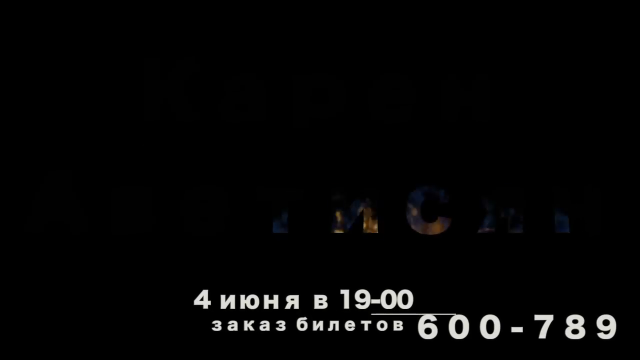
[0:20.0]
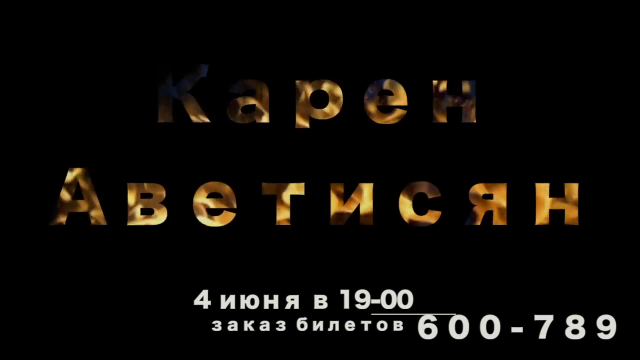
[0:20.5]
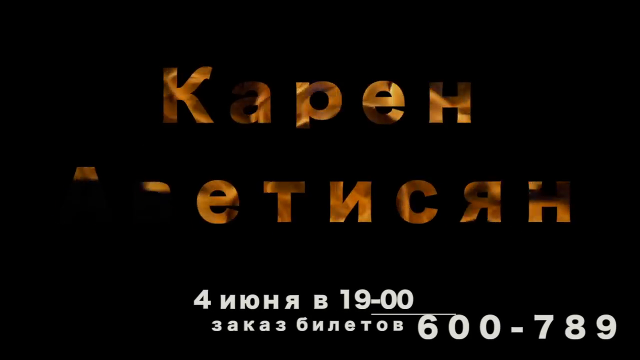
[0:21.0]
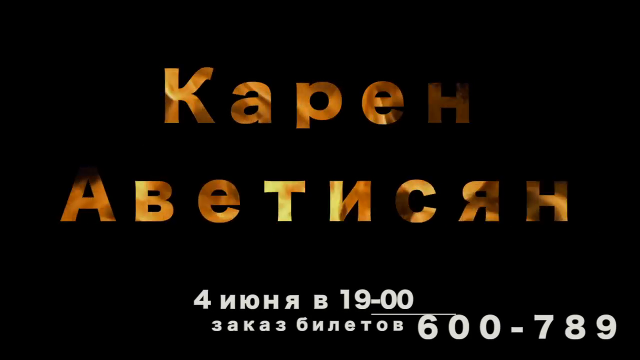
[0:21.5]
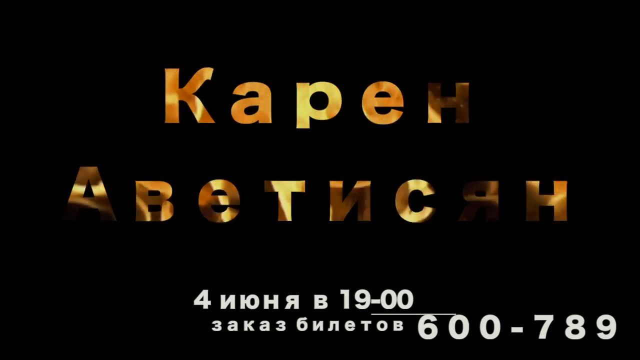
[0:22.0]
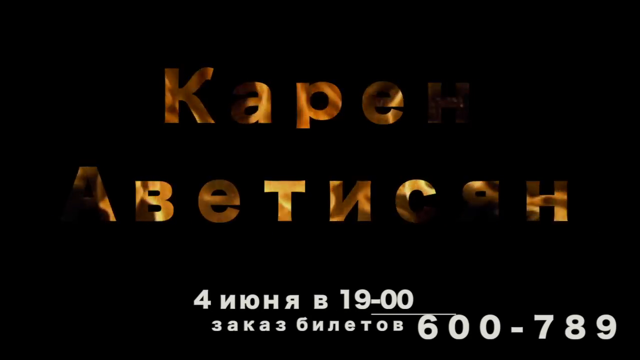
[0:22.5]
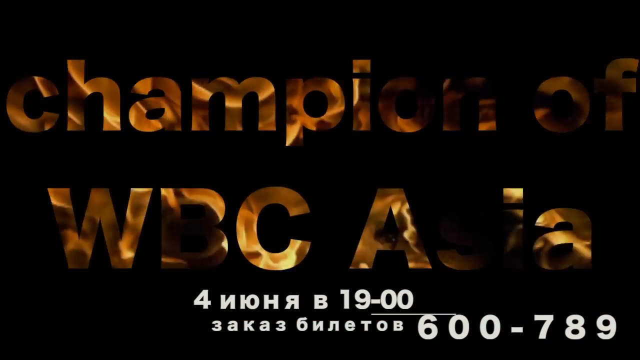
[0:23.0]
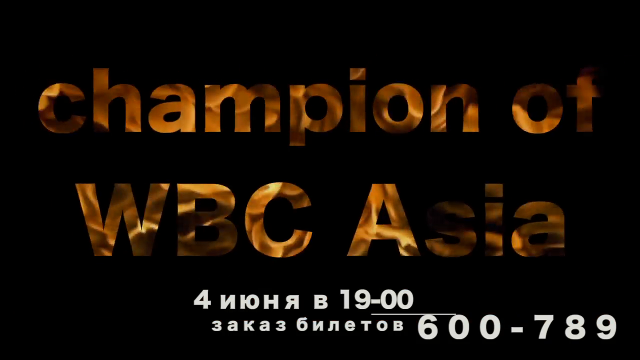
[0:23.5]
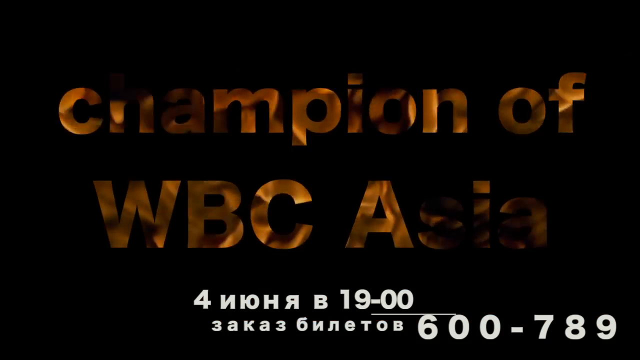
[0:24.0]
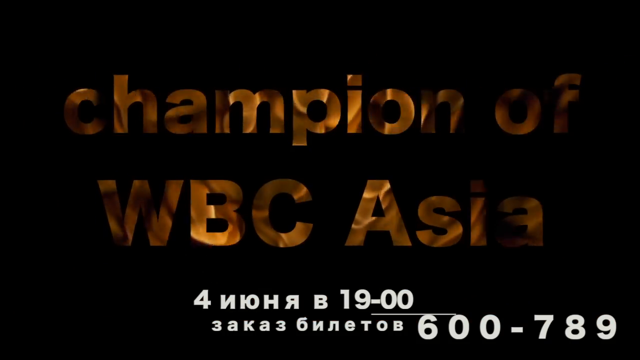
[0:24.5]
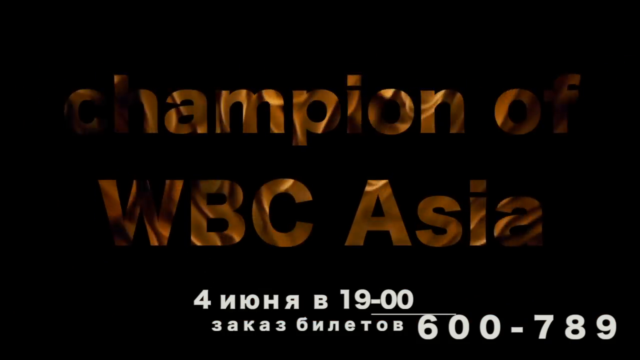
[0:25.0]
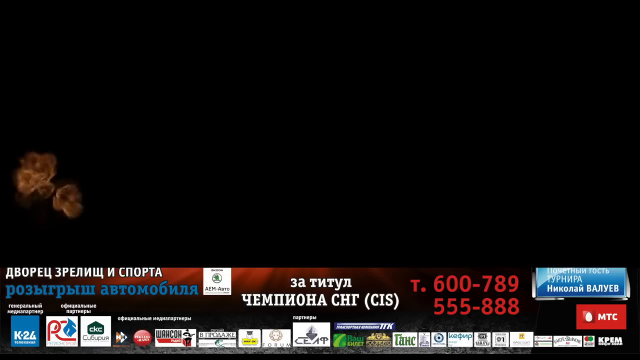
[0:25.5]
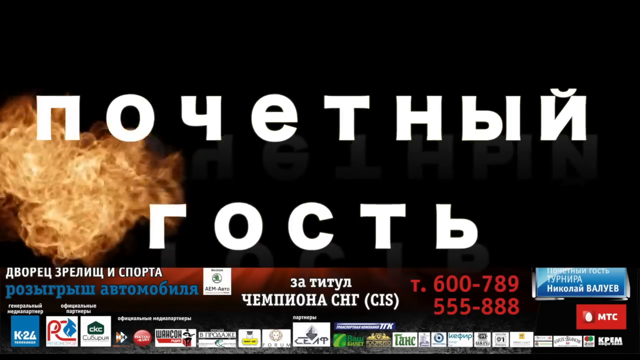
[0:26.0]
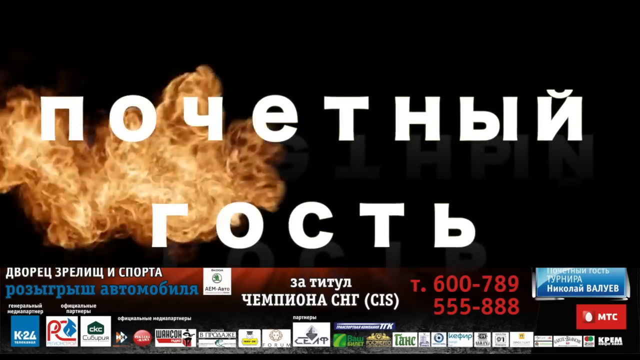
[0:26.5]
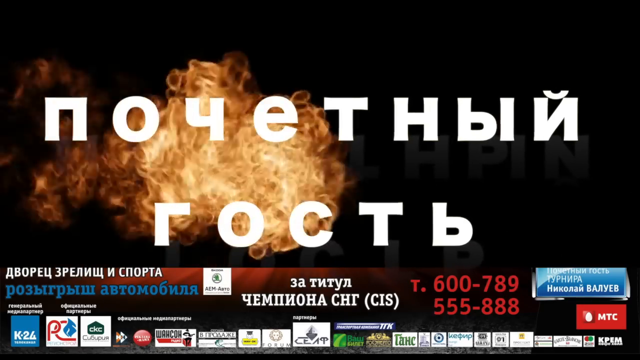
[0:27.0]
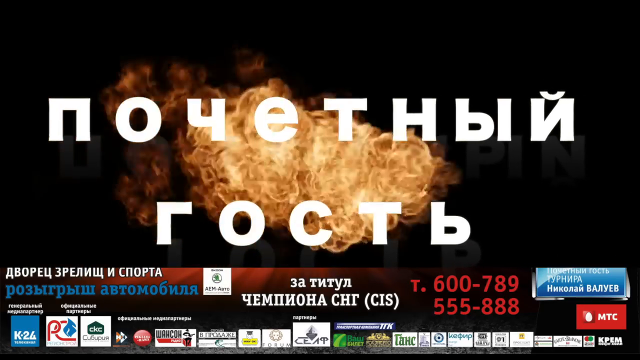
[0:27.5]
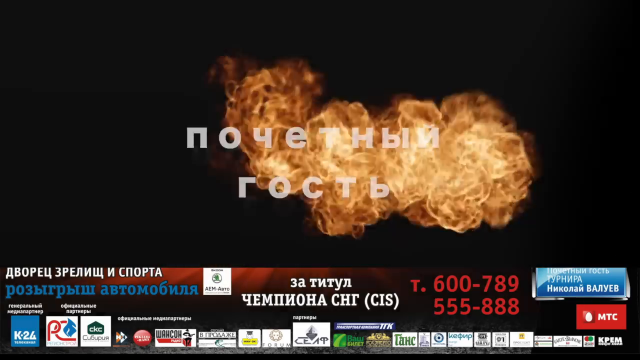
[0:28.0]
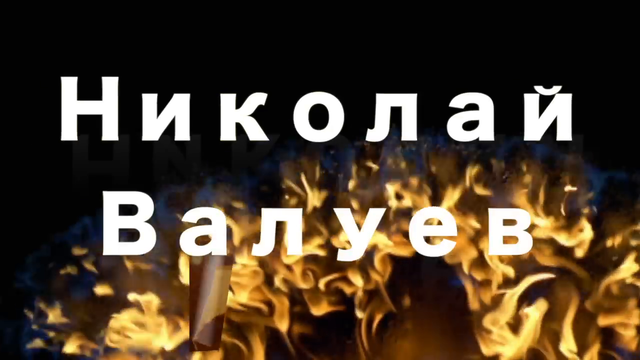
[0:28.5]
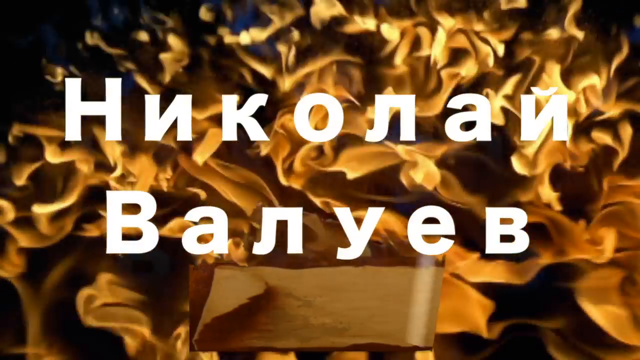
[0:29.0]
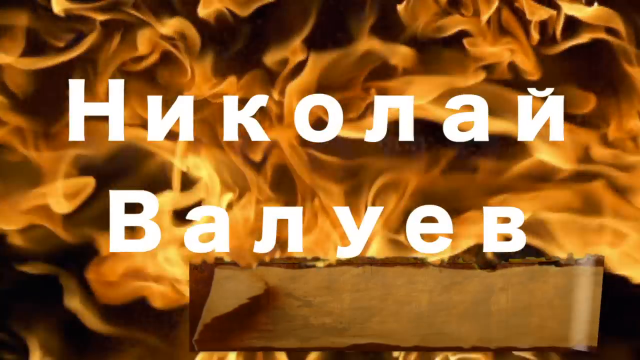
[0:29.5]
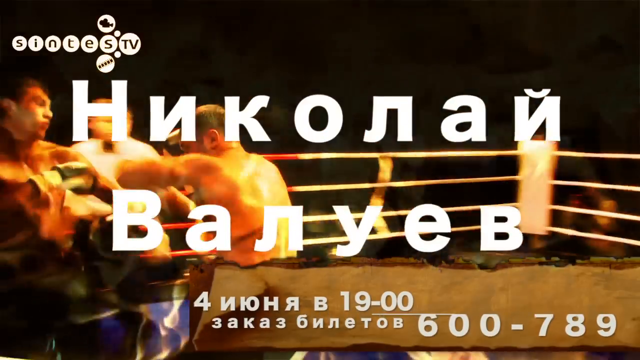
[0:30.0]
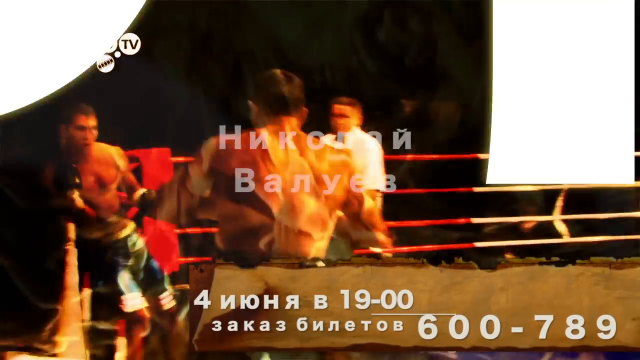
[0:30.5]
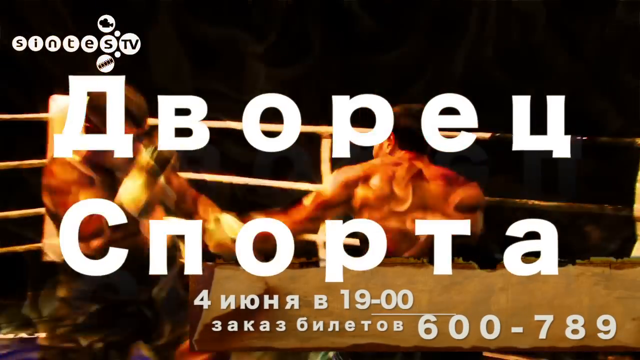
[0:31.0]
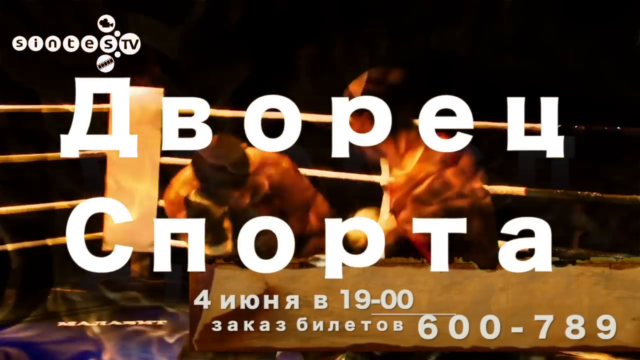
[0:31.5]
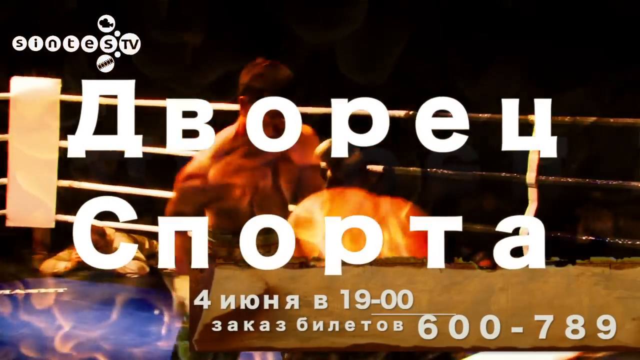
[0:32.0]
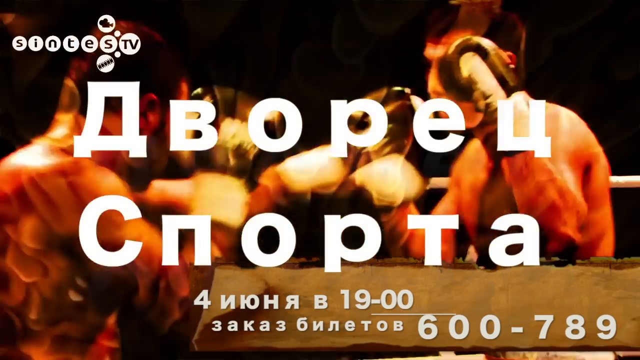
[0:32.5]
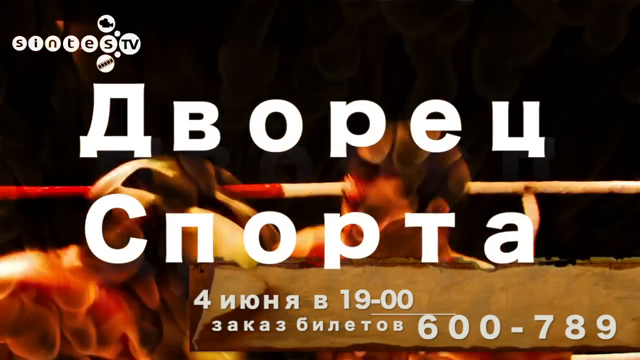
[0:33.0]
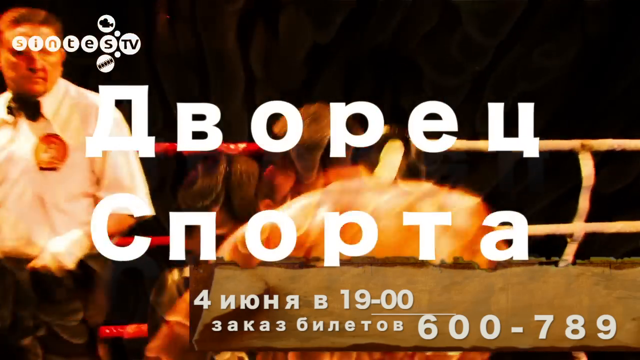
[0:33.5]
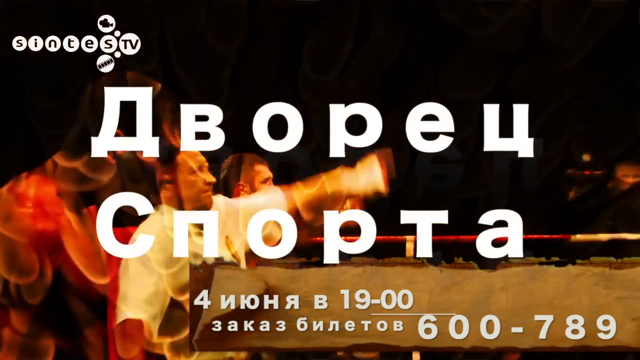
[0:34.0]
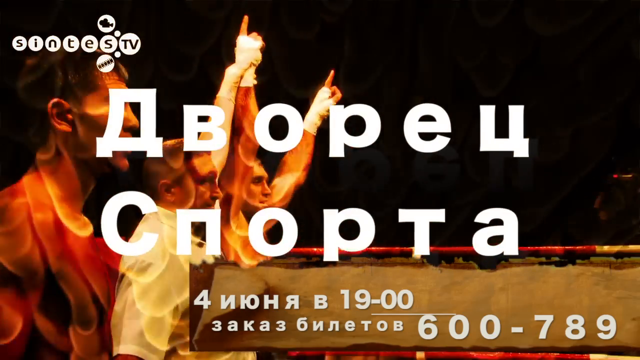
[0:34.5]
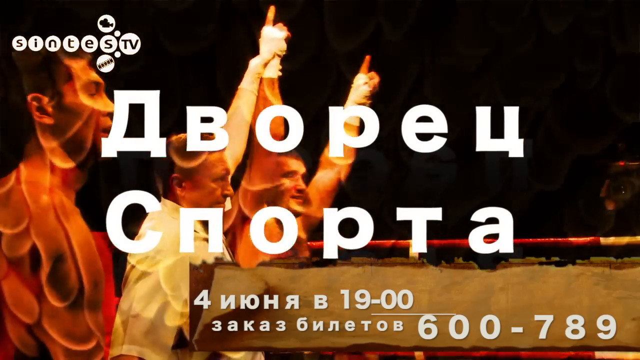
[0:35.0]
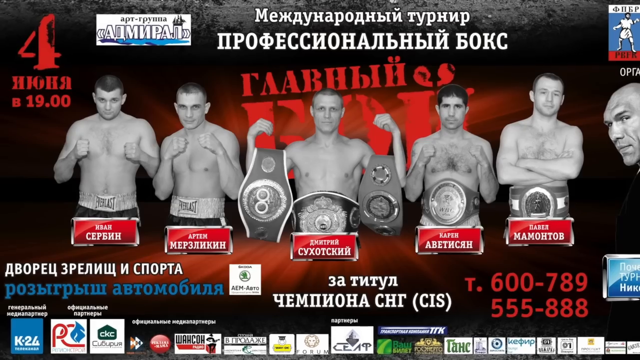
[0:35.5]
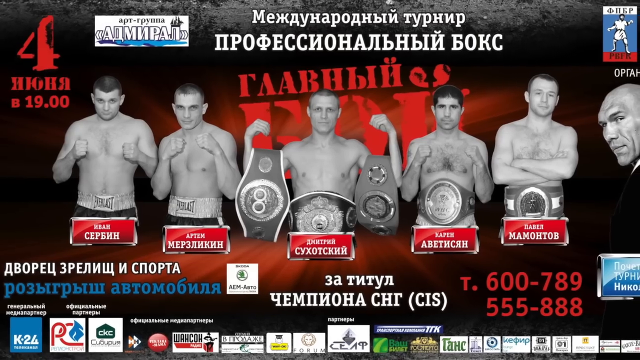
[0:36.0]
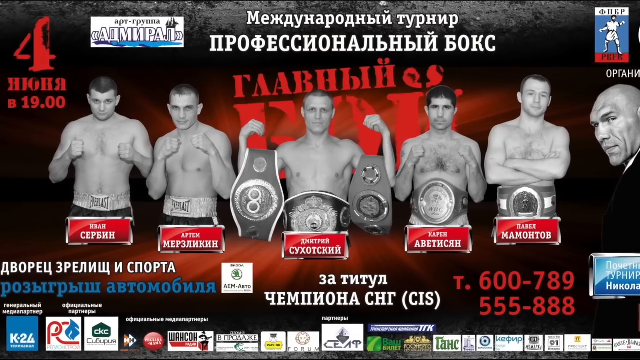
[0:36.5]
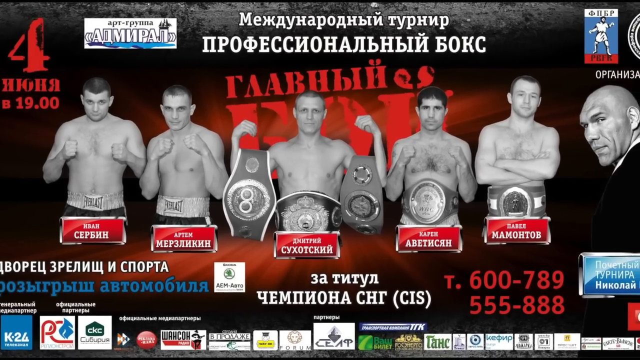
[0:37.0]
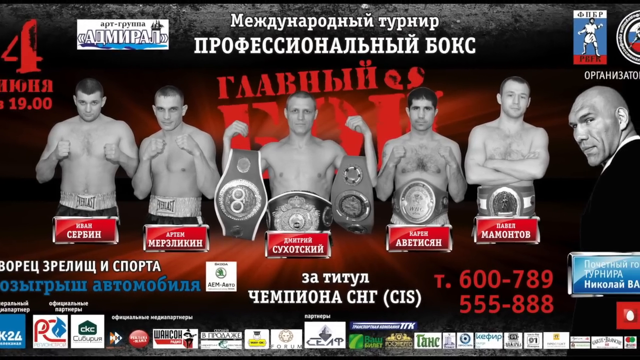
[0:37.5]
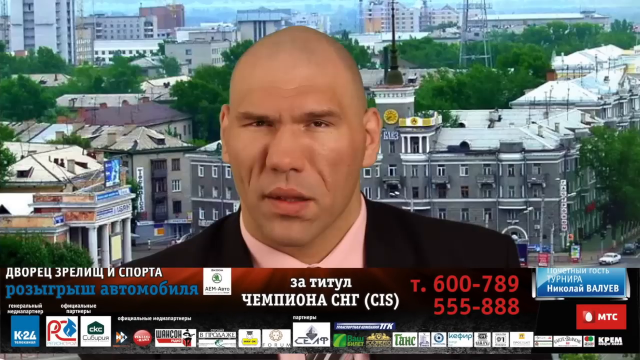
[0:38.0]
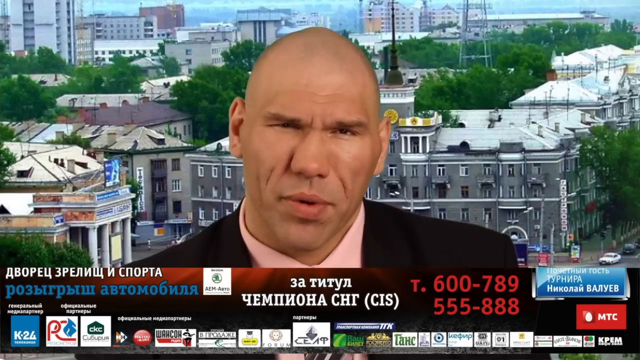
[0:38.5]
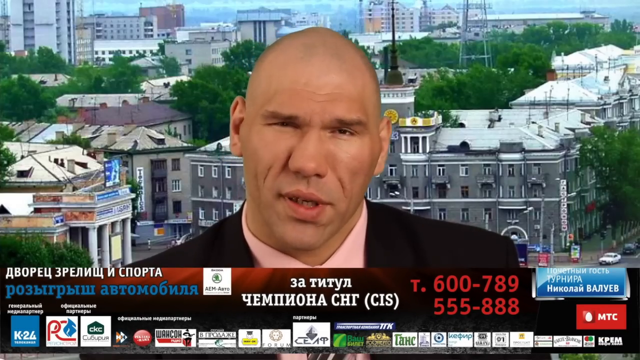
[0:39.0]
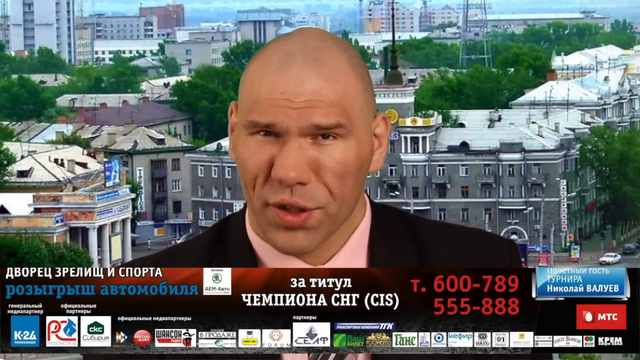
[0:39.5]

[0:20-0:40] The video starts with what looks like Russian text in a sort of orangish color, with a dynamic image of fire burning inside the letters, and white Russian text at the bottom middle. The scene changes and the text in the middle reads "Champion of WBC Asia", with the same fiery burning image inside each letter. The scene changes to white Russian text while fire moves from the left side of the screen to the right in the background. Next comes more white Russian text over a background that appears to be fire burning. The scene then shows two people boxing in a boxing ring, and a referee raises the arm of one of the boxers. The scene changes to five shirtless boxers in the middle of the screen with their names underneath in Russian, and a bald man on the far right looking toward the camera. The middle boxer appears to have three belts, one on his waist and one on each arm. The second and third person to the right of the middle boxer also have belts on.